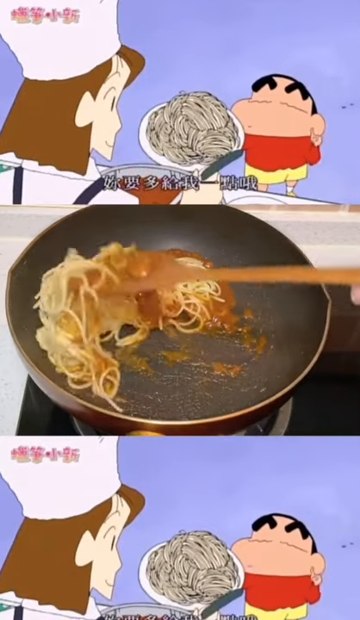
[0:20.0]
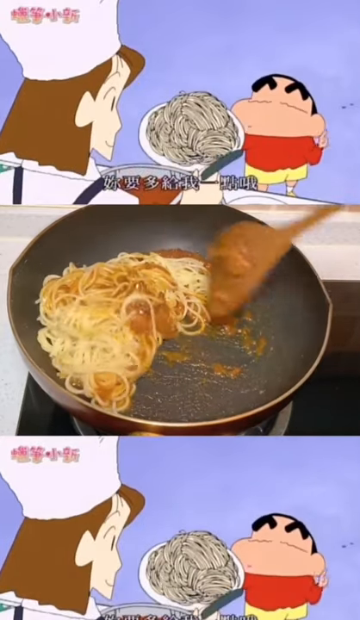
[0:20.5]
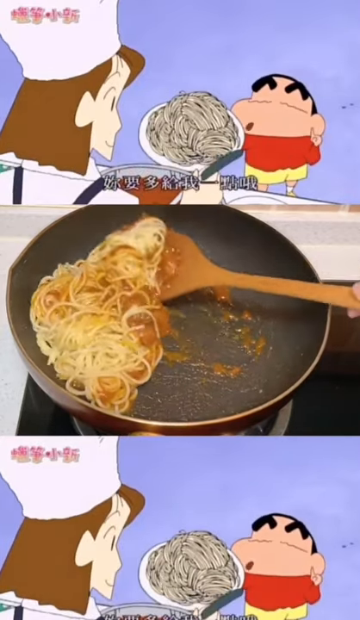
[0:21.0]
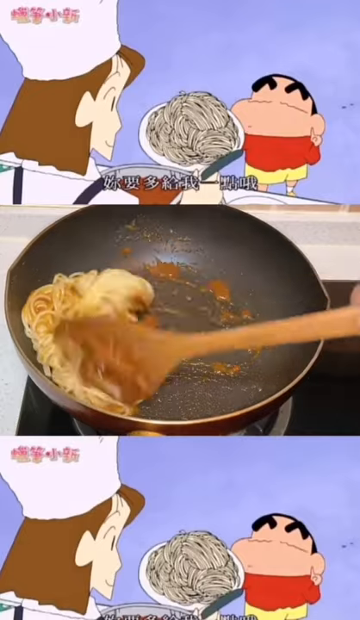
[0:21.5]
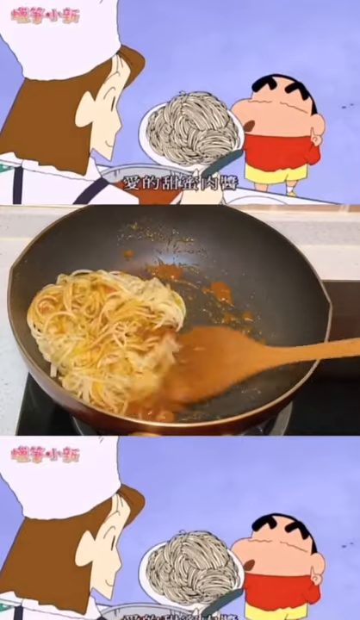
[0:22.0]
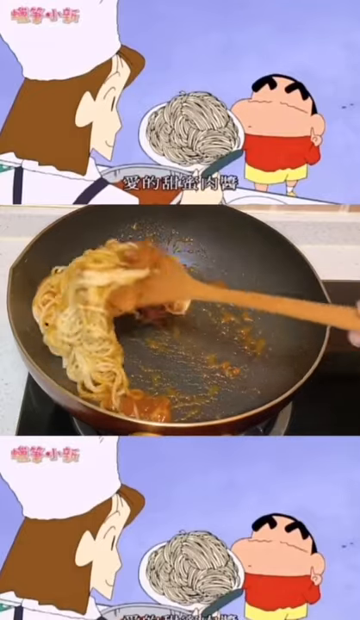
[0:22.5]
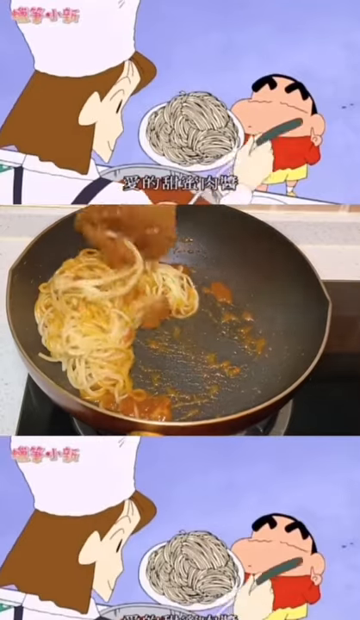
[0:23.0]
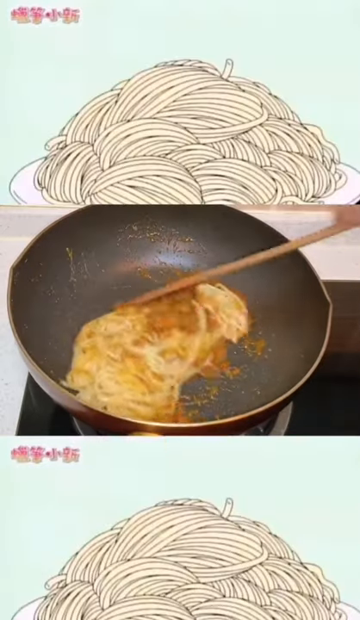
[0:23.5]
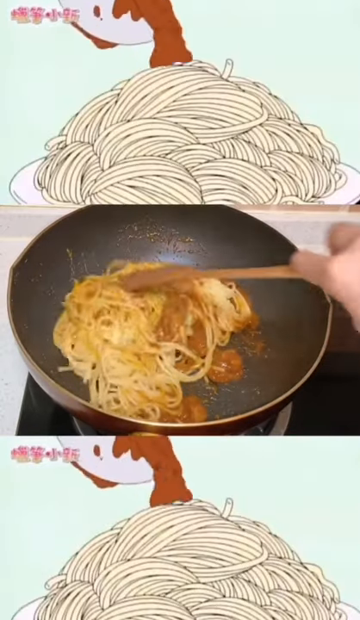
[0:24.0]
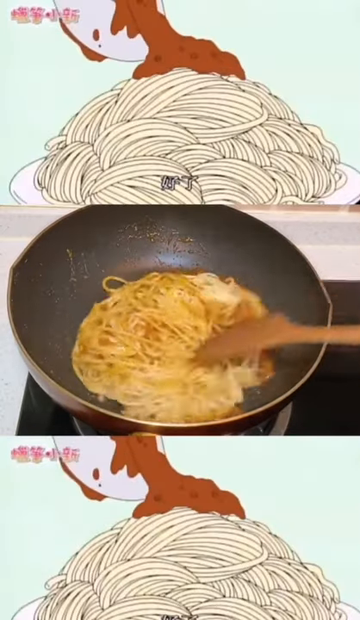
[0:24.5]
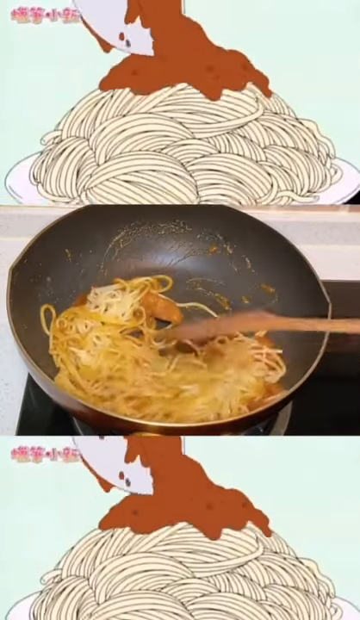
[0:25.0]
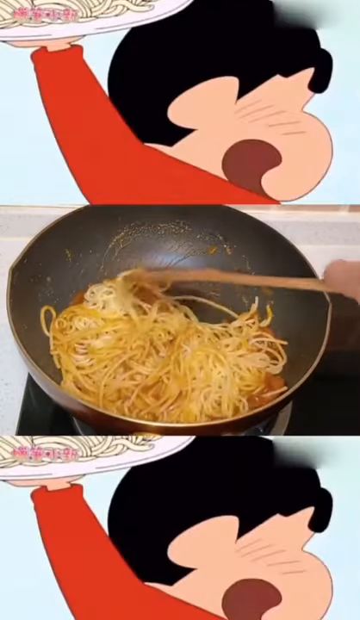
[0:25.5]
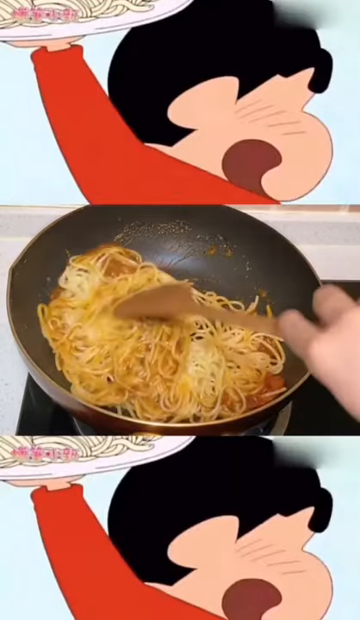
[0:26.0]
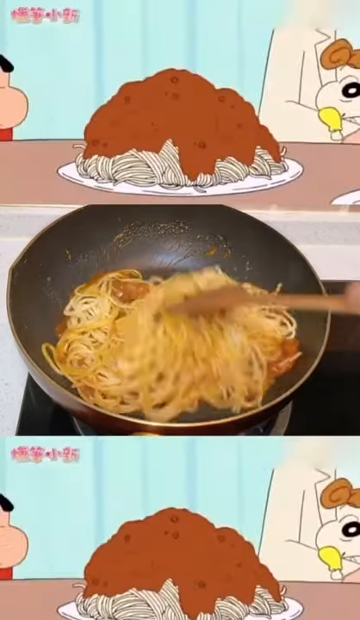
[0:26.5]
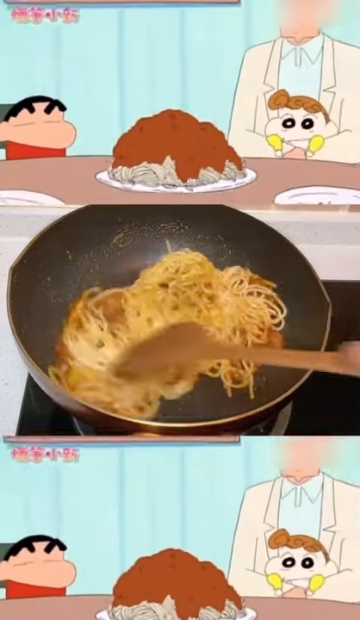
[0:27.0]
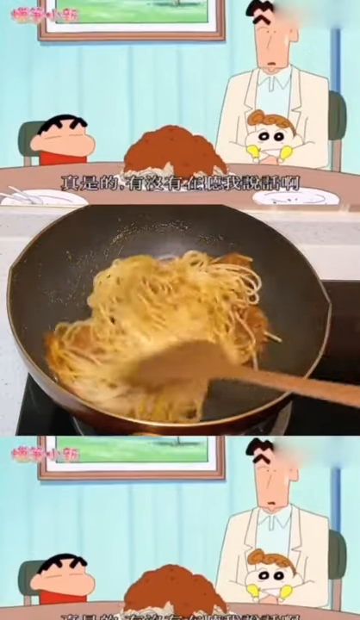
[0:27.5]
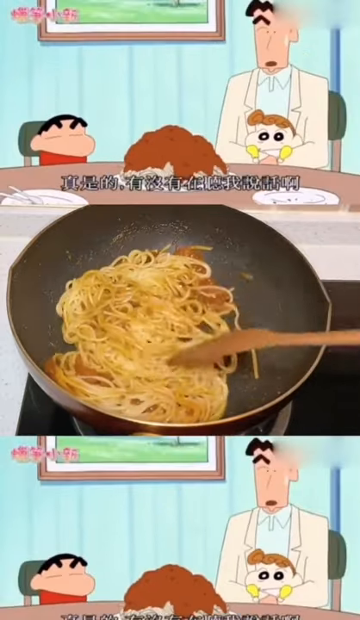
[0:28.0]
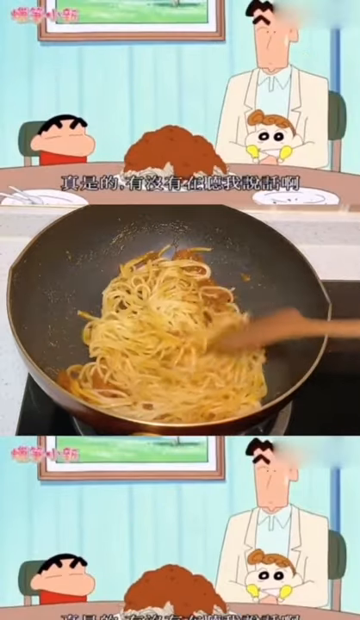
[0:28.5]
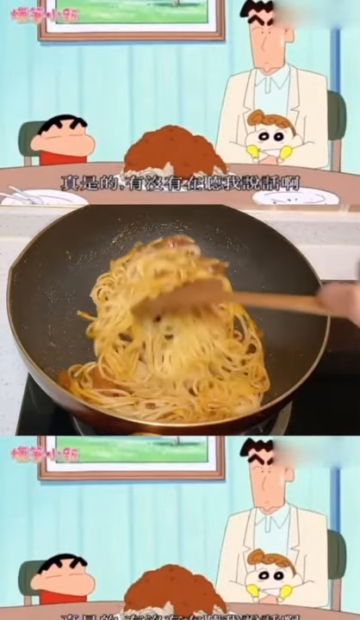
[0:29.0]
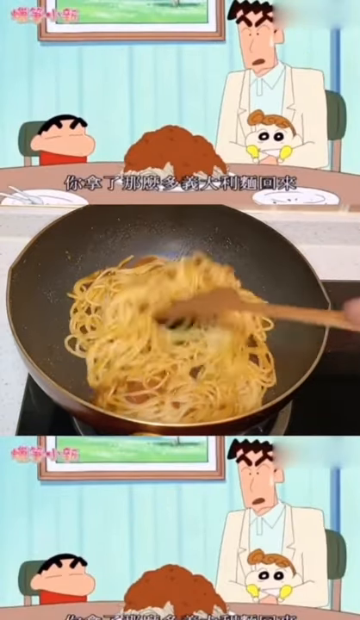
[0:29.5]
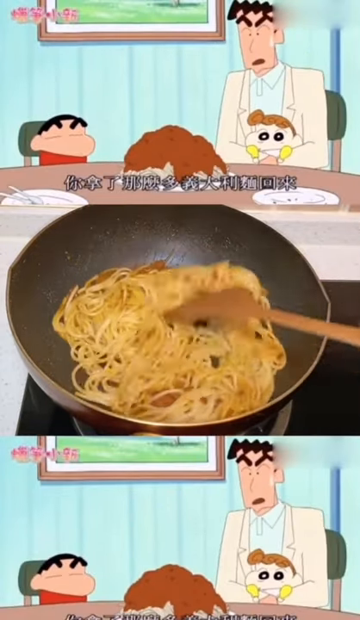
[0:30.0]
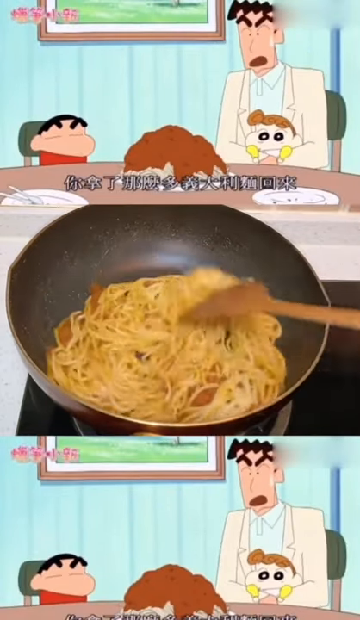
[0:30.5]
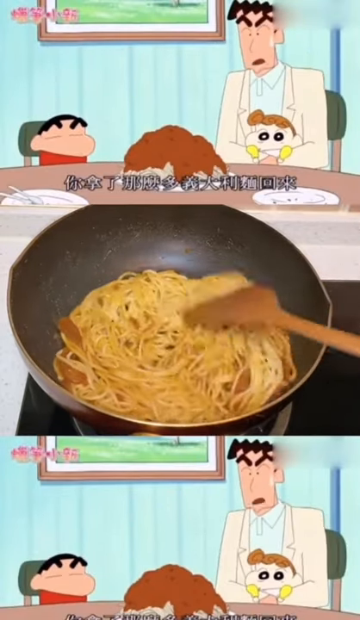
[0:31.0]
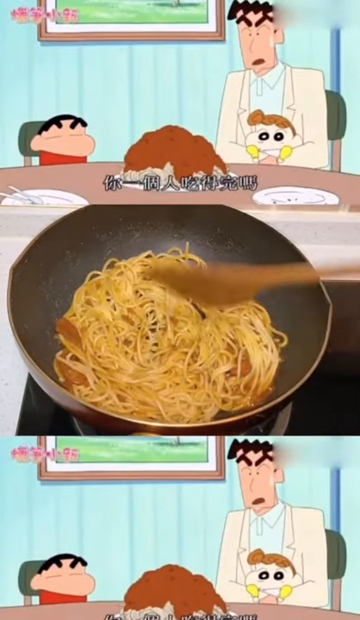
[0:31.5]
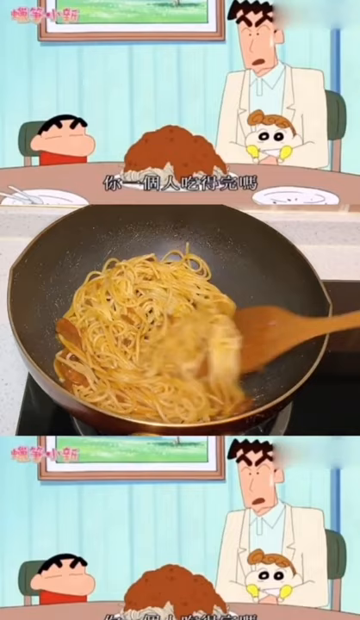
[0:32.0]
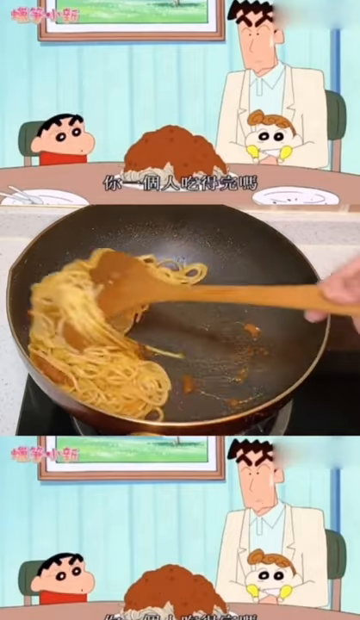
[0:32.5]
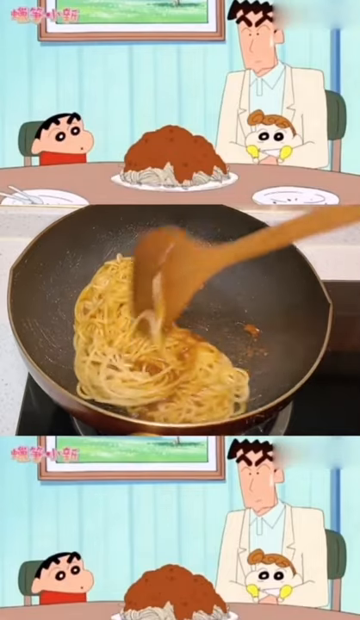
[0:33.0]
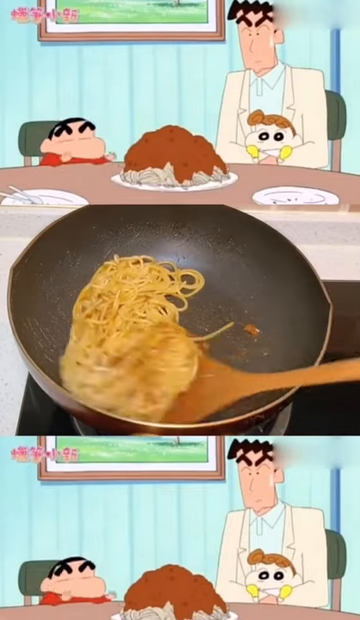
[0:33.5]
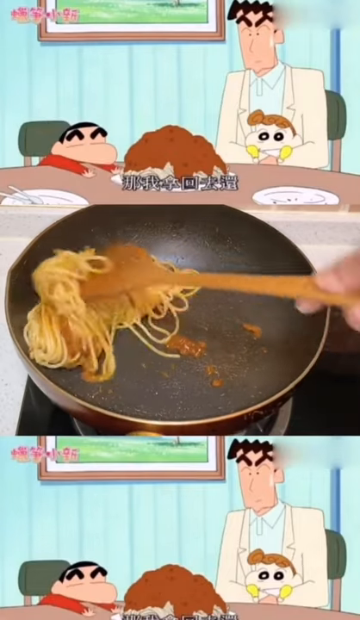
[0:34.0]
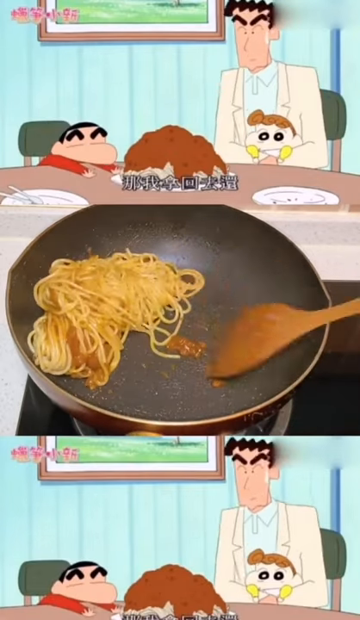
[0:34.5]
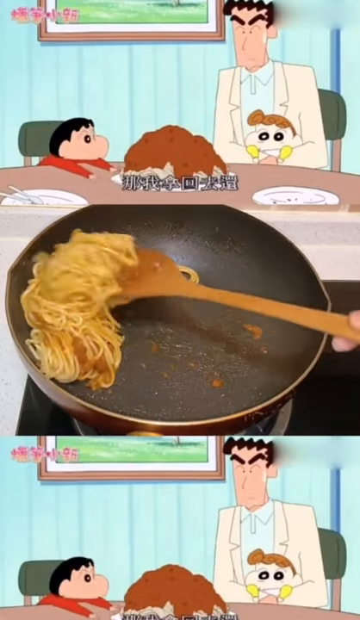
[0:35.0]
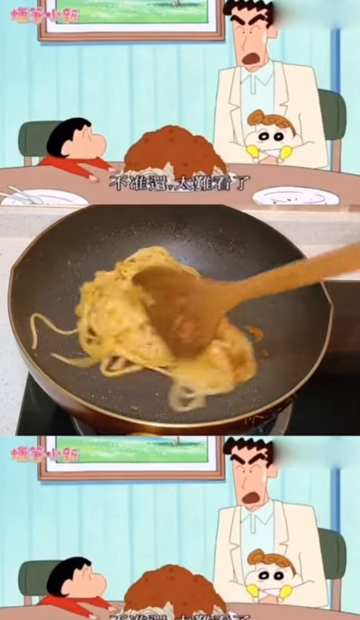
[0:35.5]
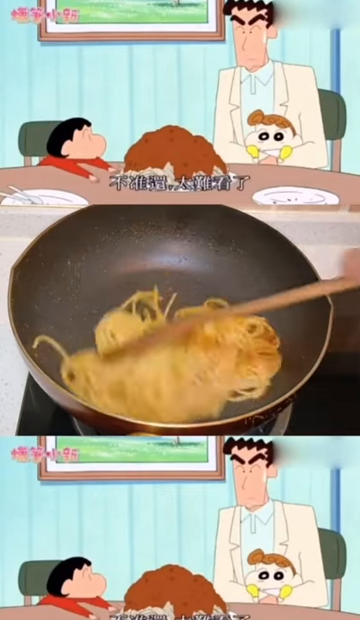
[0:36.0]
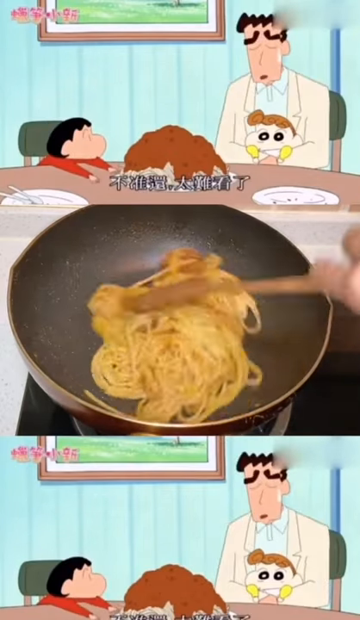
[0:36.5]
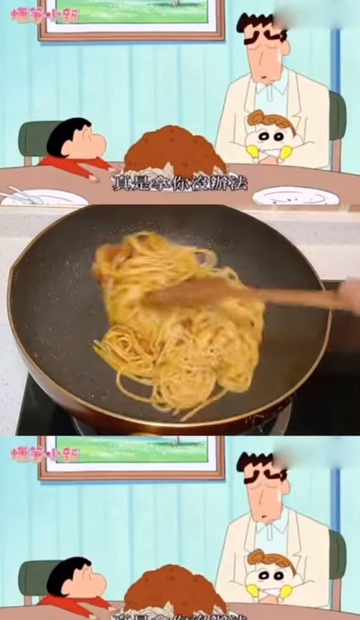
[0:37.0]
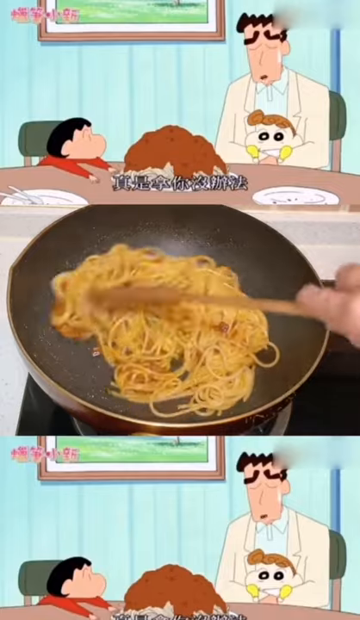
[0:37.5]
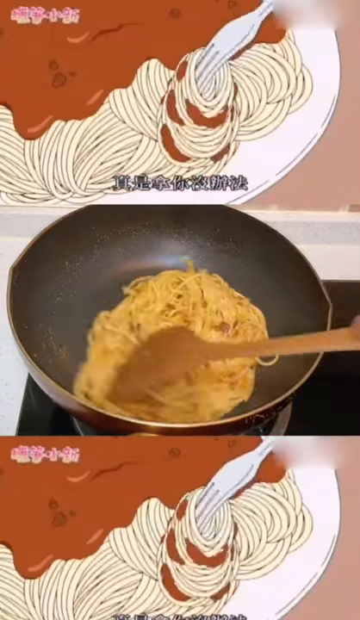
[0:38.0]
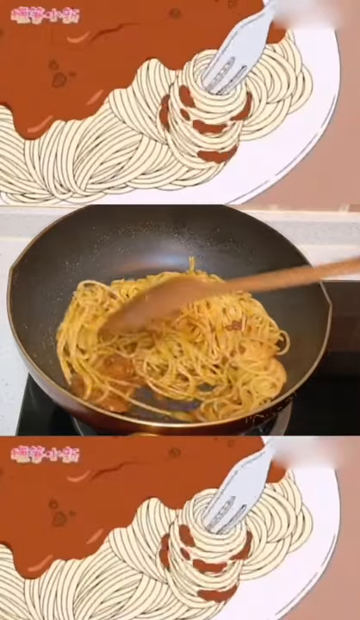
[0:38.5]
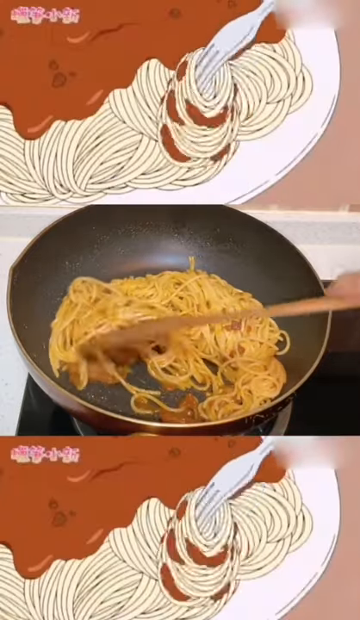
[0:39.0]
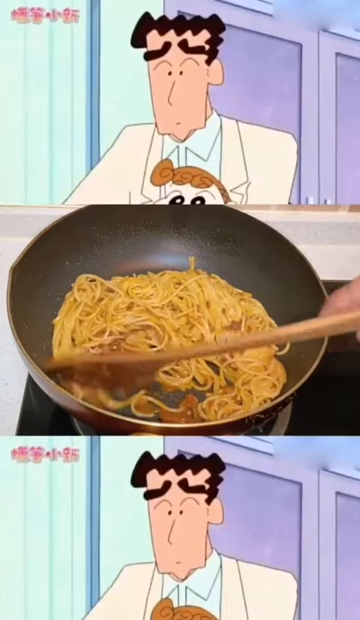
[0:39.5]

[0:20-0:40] In the middle video, the person uses the wooden spoon to stir the noodles into the sauce, moving the spaghetti around the pan, kind of turning and flipping it and incorporating the sauce fully into the noodles as the pan stays on and frying. The same cartoon continues to play at the top and bottom of the screen, and its subject seems to relate to the middle video: it shows a plate of what looks like spaghetti with some sauce being poured on it. The cartoon then cuts to an adult and two kids at a table, looking at the plate of spaghetti with the reddish-brown sauce kind of dumped on top. They talk, and the adult twirls some spaghetti on his fork and puts it in his mouth. The food in the cartoon is possibly the same as the one being cooked in the middle video.